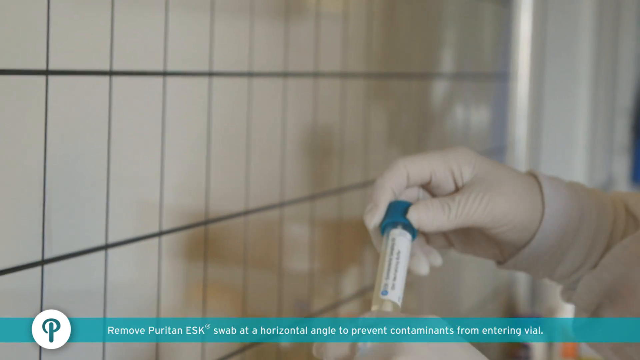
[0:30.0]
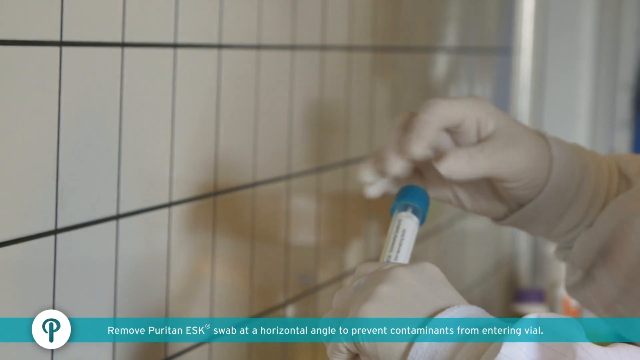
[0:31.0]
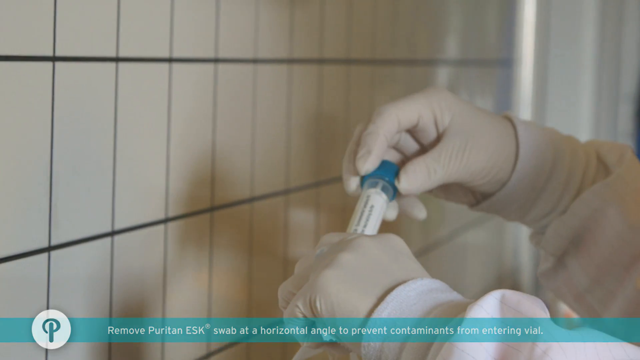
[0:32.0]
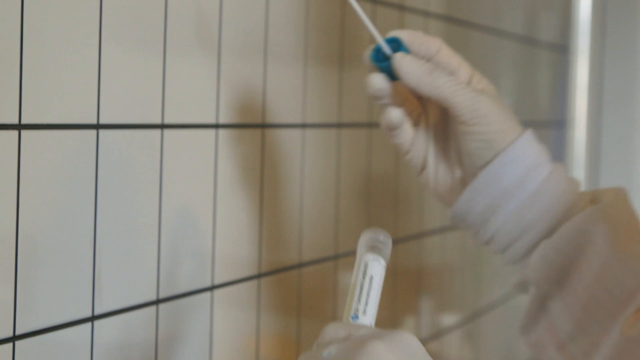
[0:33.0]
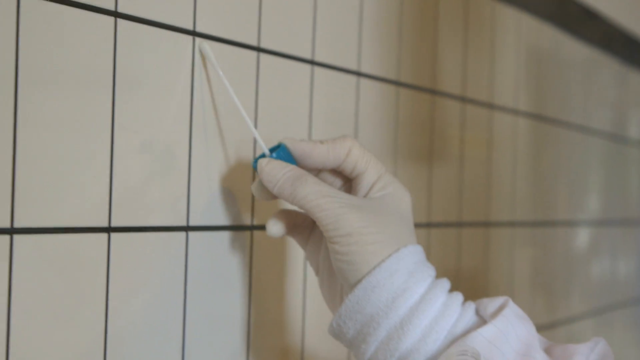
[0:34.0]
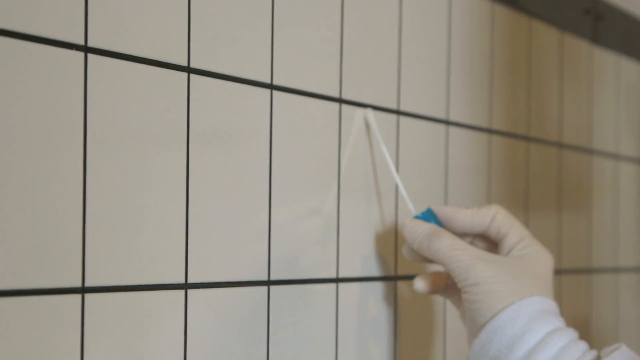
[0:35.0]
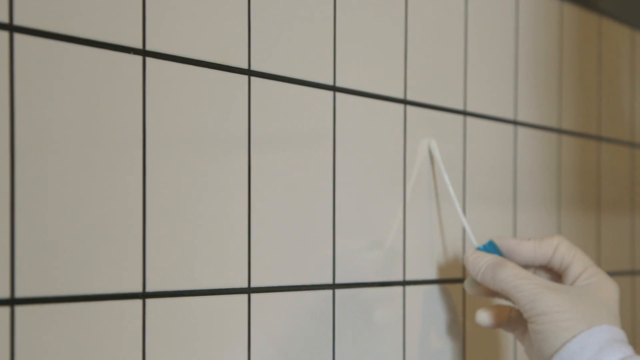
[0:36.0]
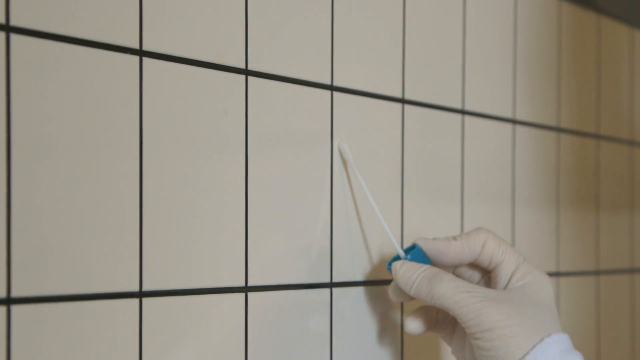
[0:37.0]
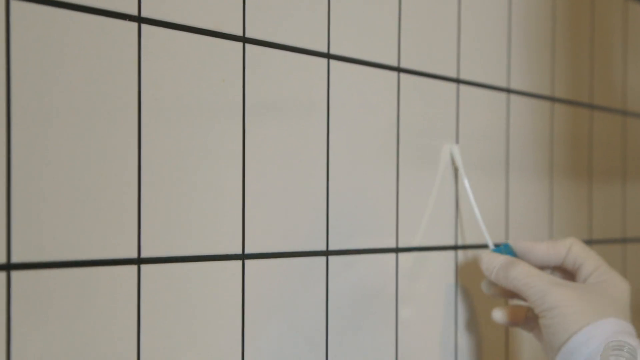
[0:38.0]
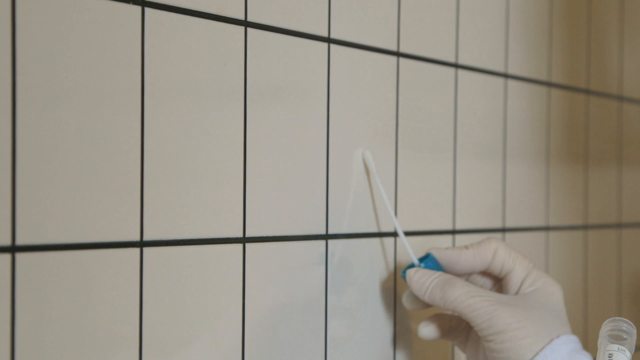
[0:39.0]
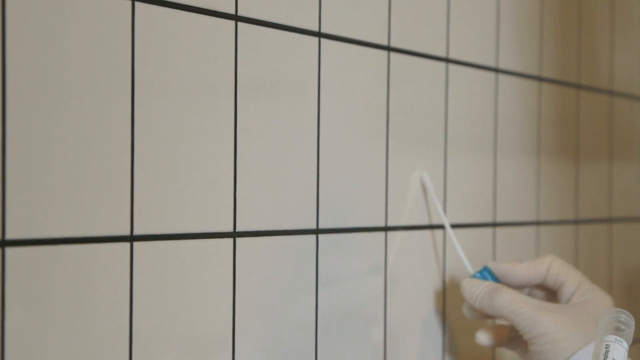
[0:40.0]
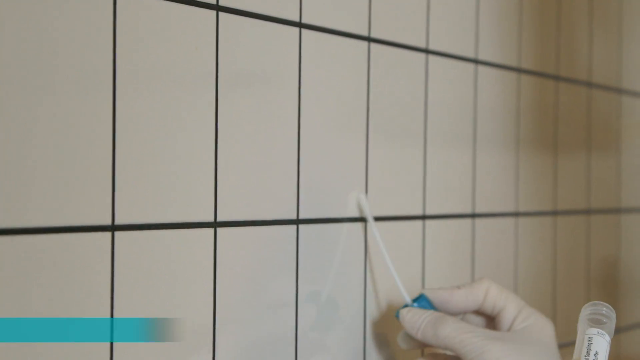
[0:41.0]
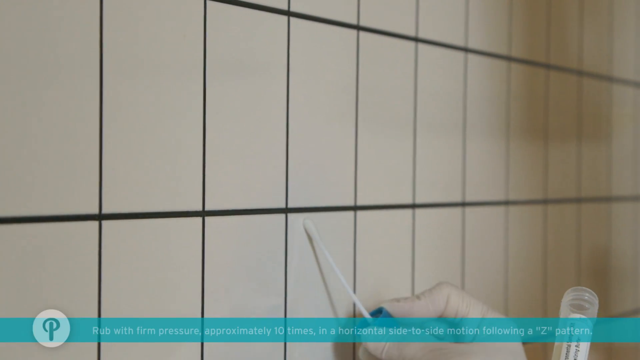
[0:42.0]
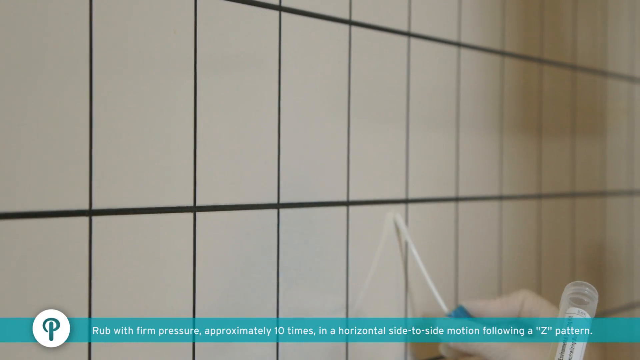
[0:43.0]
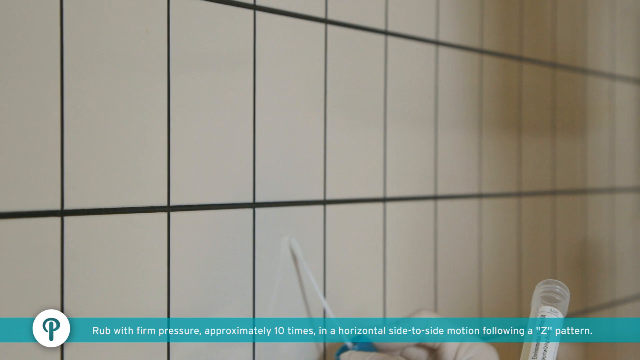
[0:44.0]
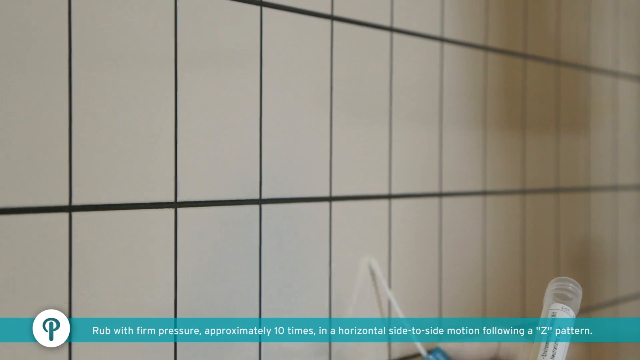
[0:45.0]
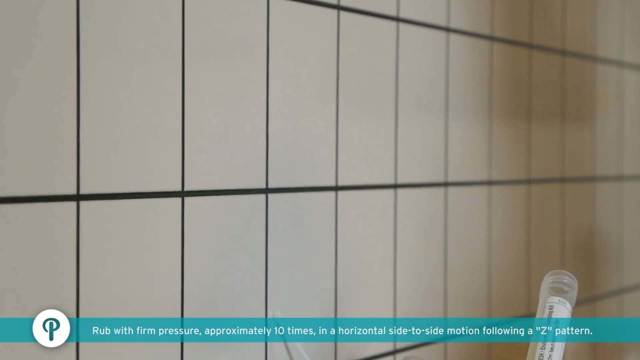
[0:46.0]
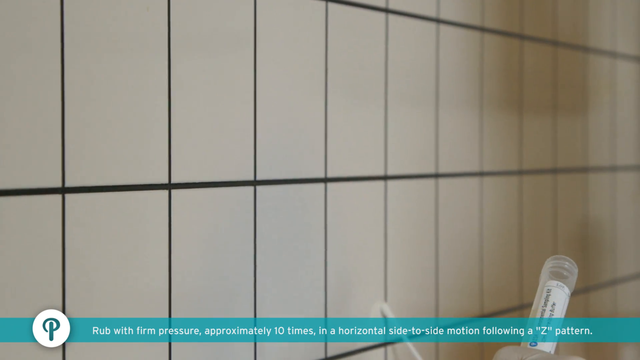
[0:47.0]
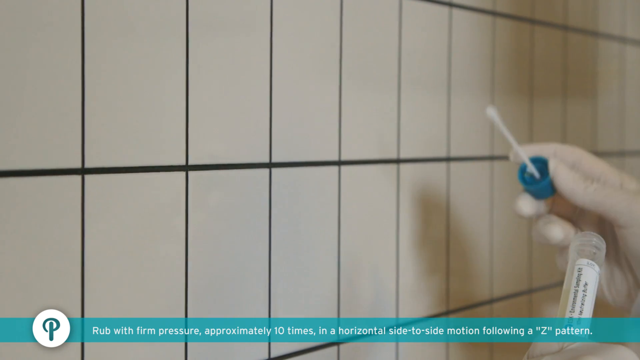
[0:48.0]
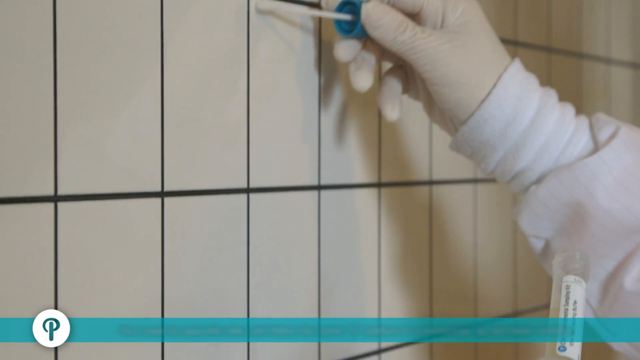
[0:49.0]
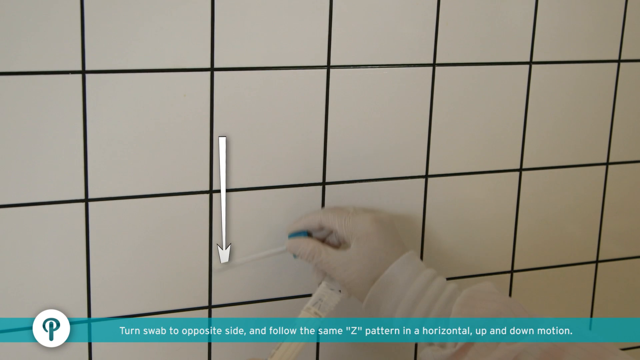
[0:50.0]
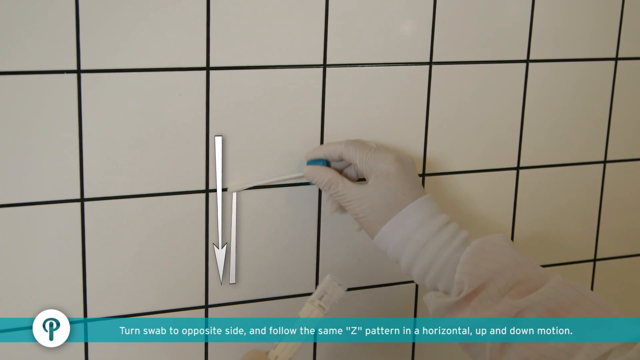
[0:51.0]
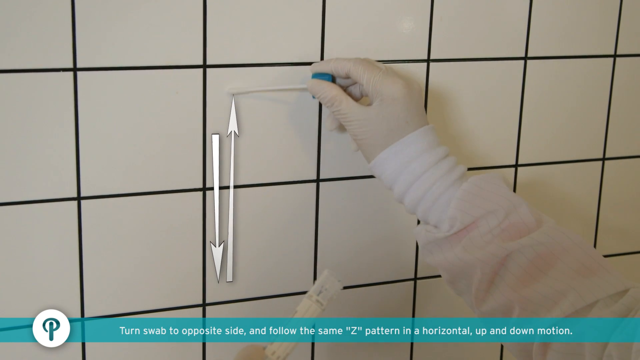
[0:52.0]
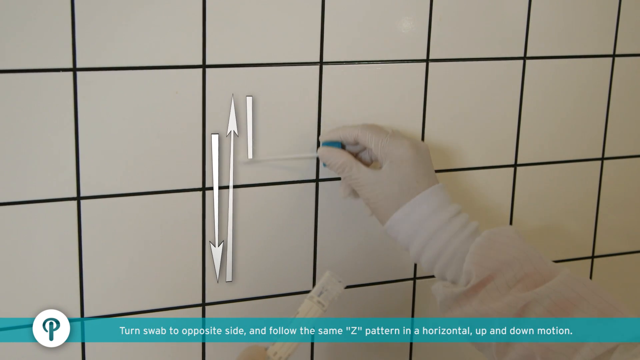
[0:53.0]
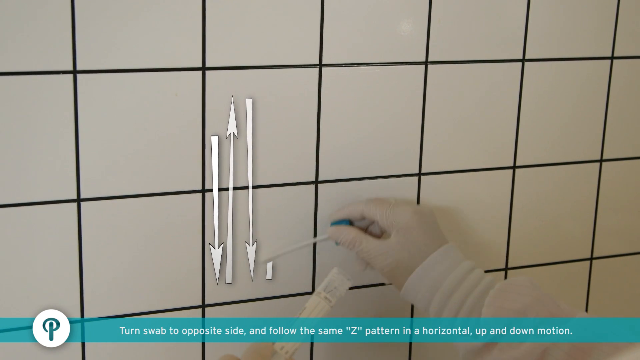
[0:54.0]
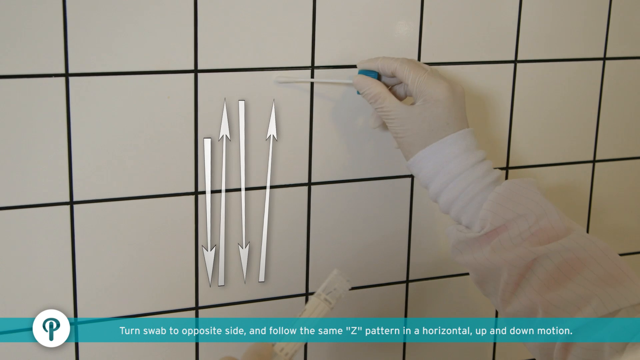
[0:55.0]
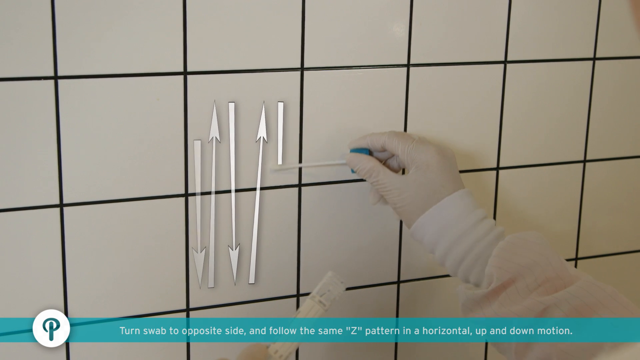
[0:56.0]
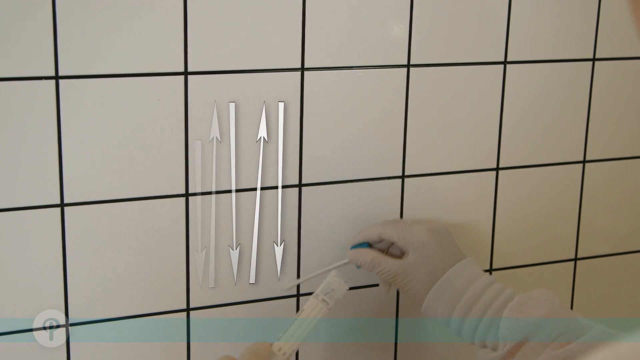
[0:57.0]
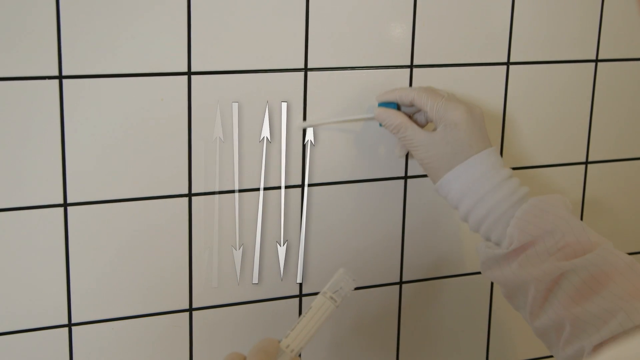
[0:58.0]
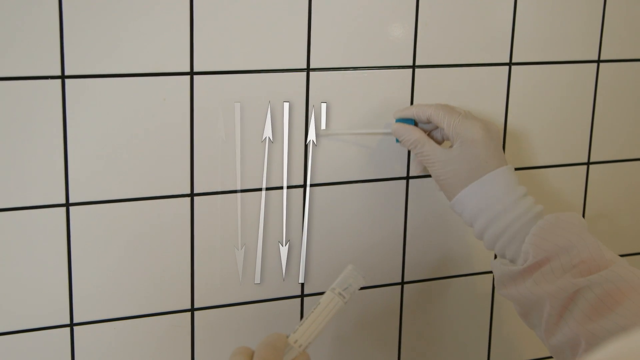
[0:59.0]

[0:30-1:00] She spreads a swab on the tile wall in a zigzag motion, left to right and back, working down the wall without covering every square inch. She then swabs in a downward and upward motion, and arrows that were not there before appear on the screen, showing her movements: down, up, down, up. She has a very steady hand. The setting appears to be some type of lab, a very sterile environment. Her wrists are covered by a top under the lab jacket, or by a part of the lab jacket, that extends out under her sleeves.